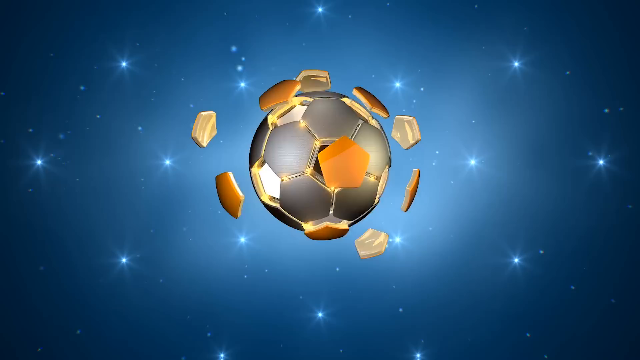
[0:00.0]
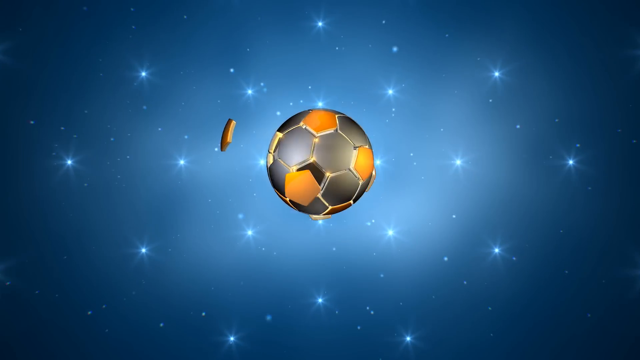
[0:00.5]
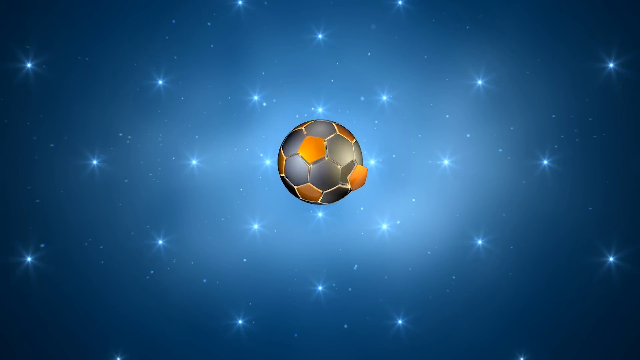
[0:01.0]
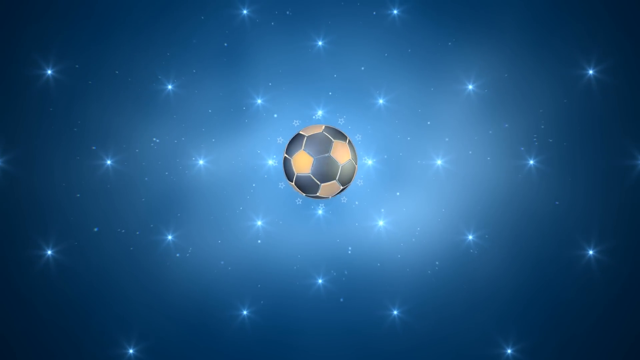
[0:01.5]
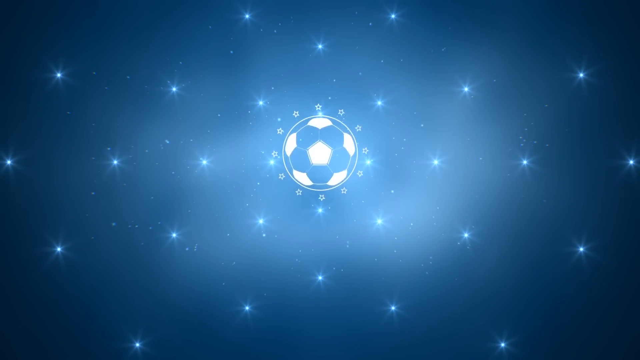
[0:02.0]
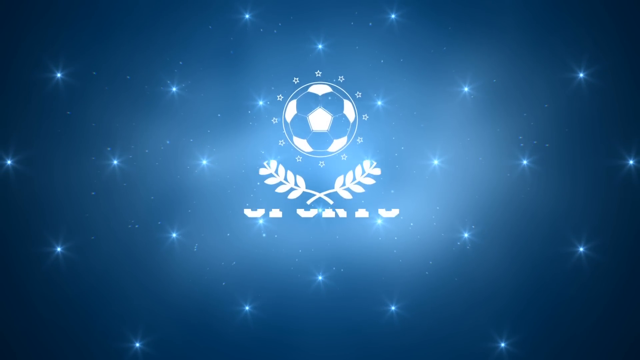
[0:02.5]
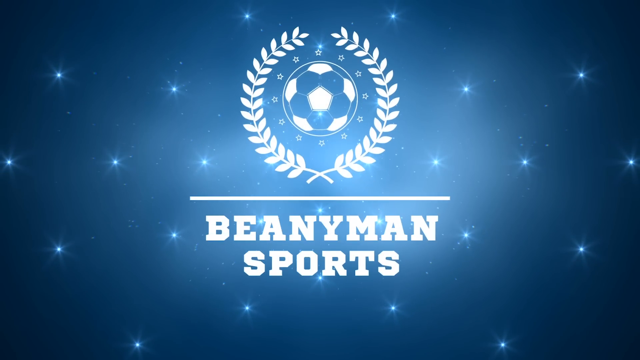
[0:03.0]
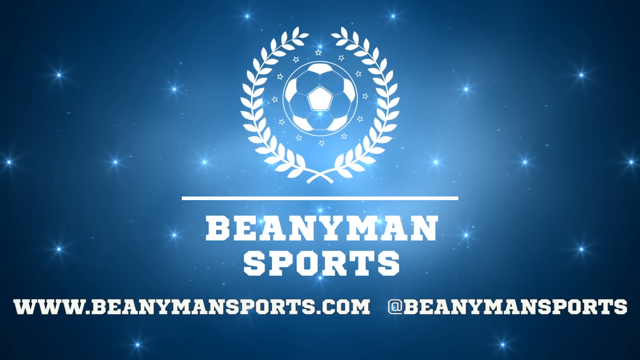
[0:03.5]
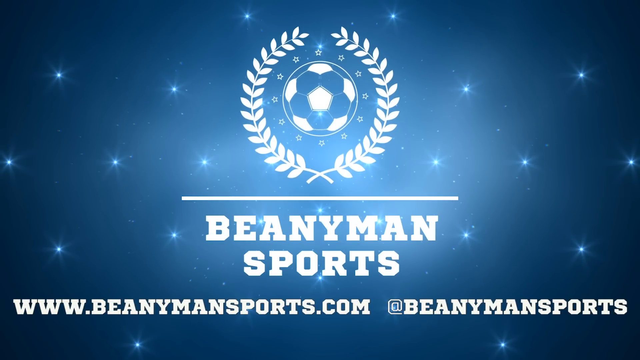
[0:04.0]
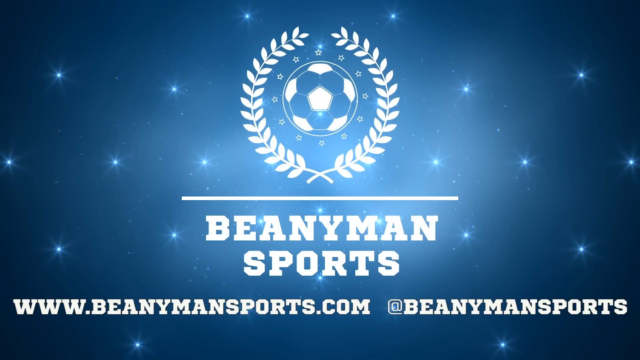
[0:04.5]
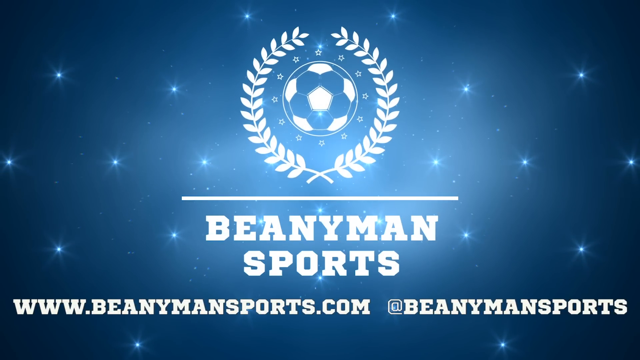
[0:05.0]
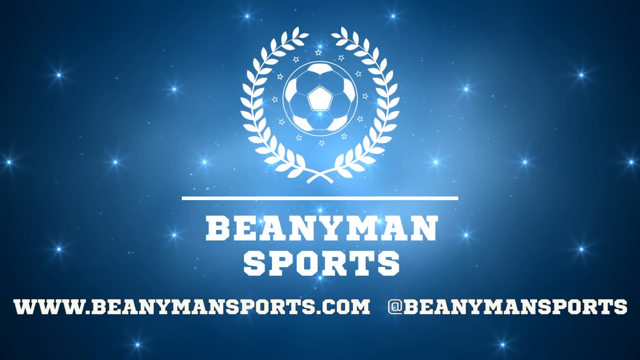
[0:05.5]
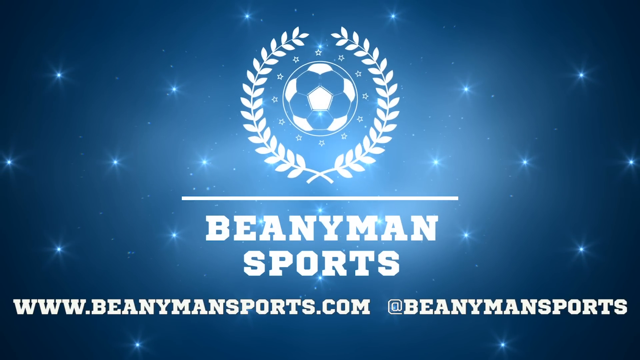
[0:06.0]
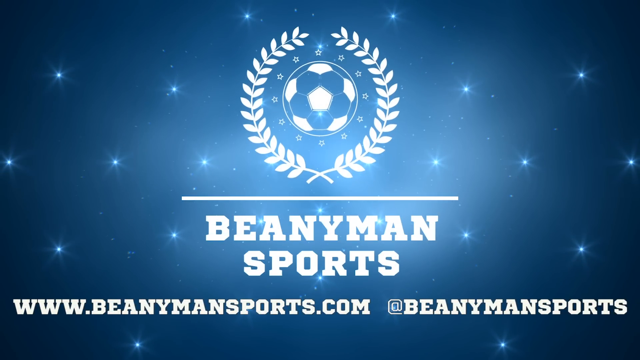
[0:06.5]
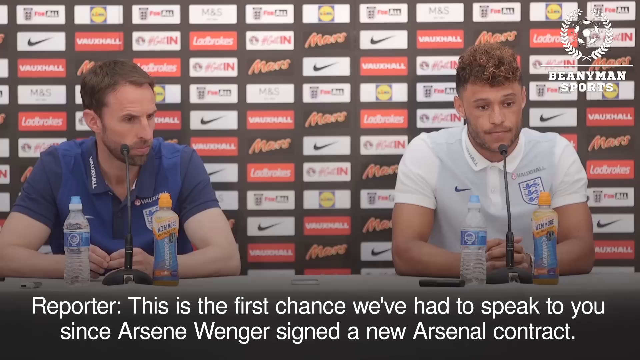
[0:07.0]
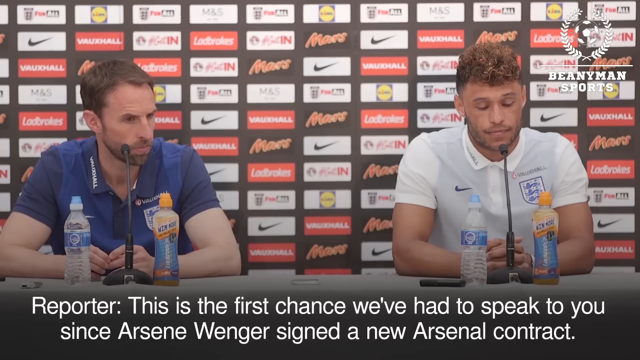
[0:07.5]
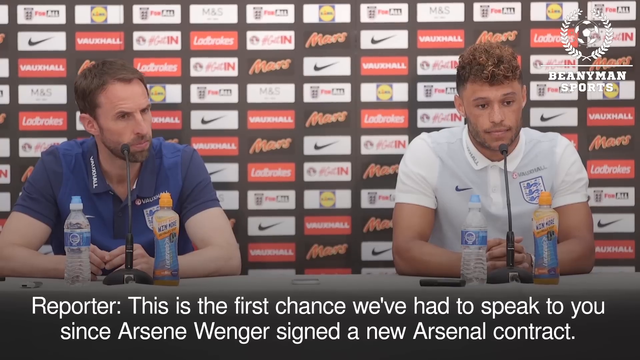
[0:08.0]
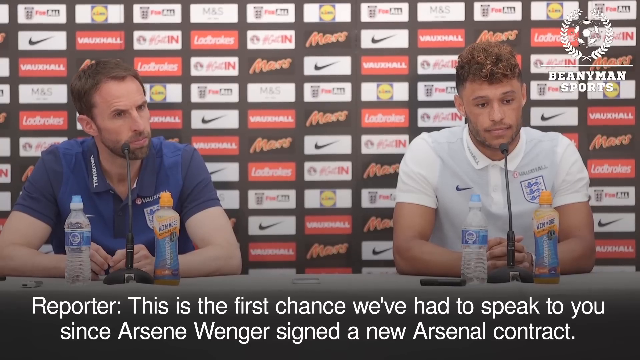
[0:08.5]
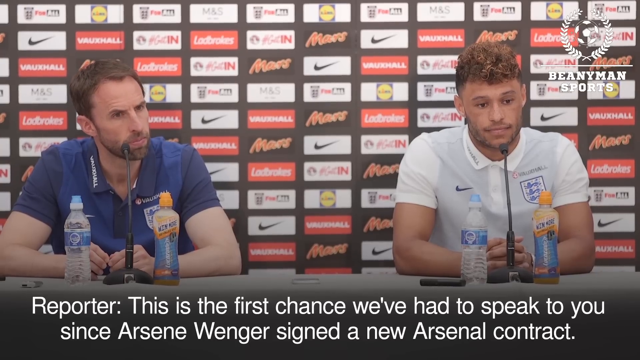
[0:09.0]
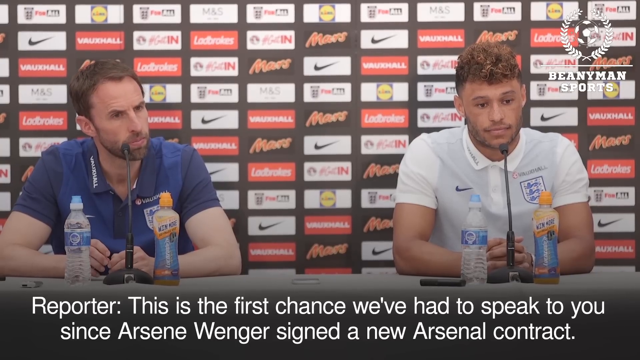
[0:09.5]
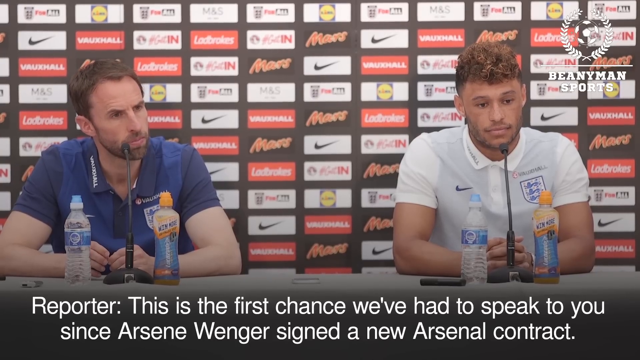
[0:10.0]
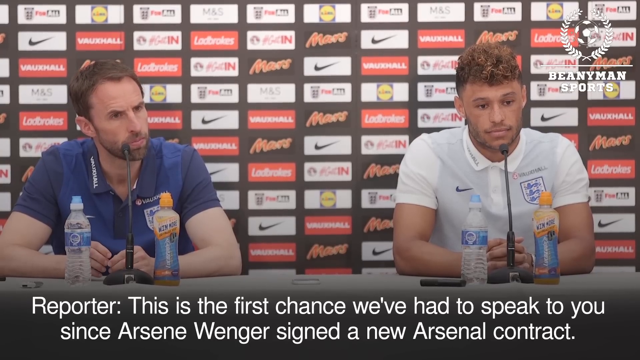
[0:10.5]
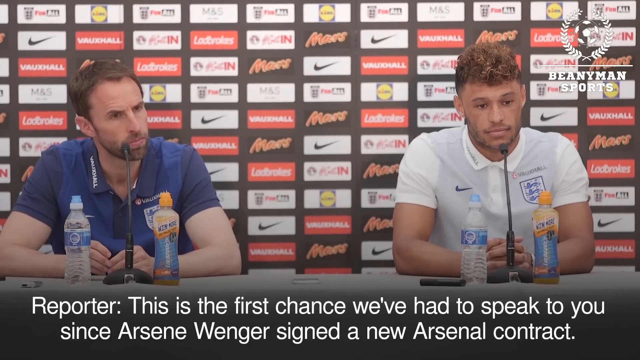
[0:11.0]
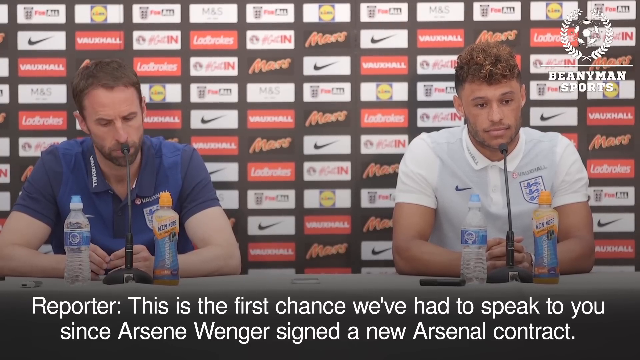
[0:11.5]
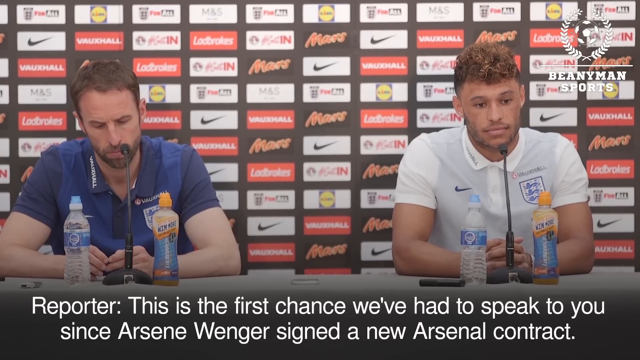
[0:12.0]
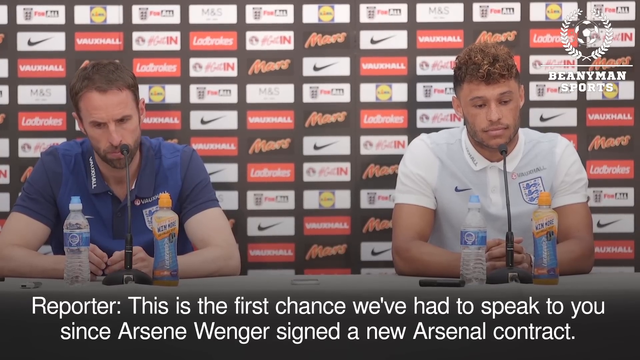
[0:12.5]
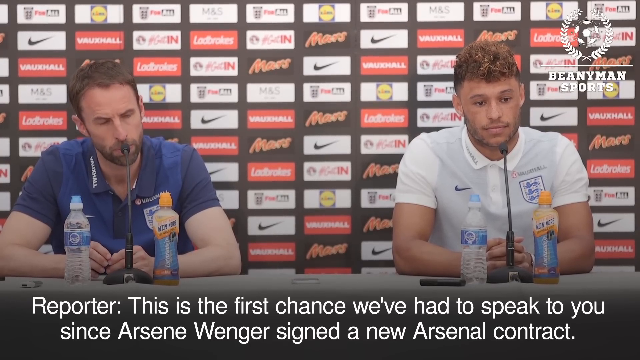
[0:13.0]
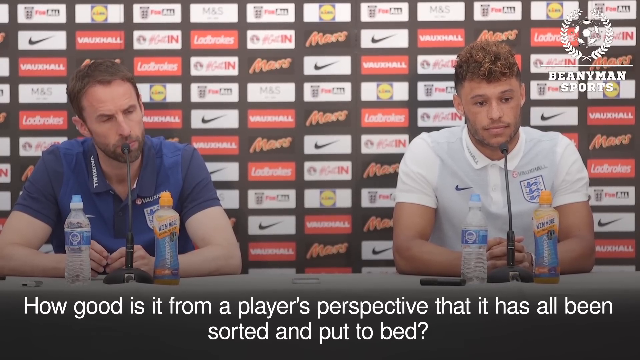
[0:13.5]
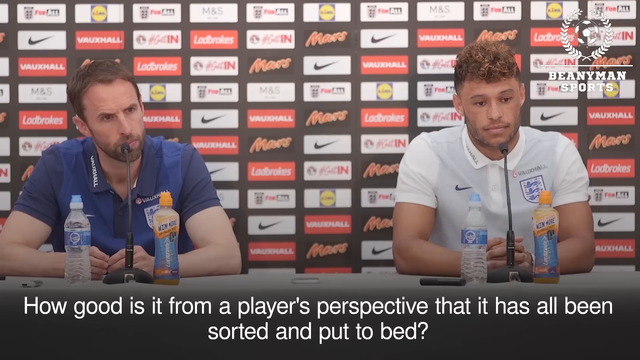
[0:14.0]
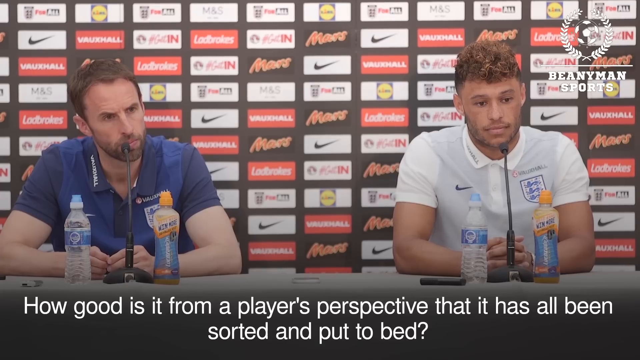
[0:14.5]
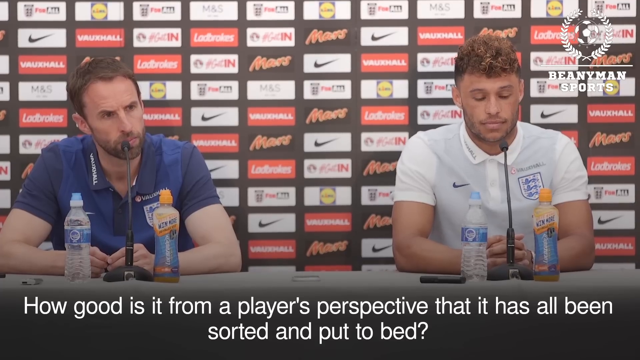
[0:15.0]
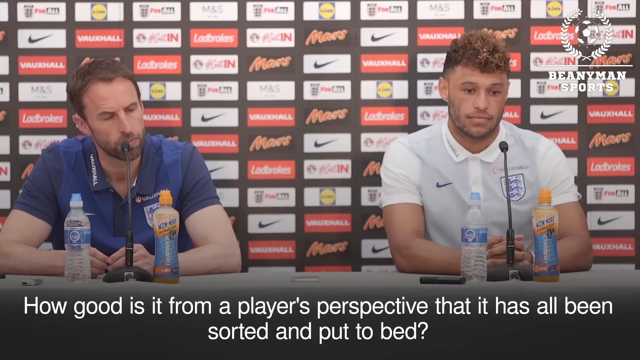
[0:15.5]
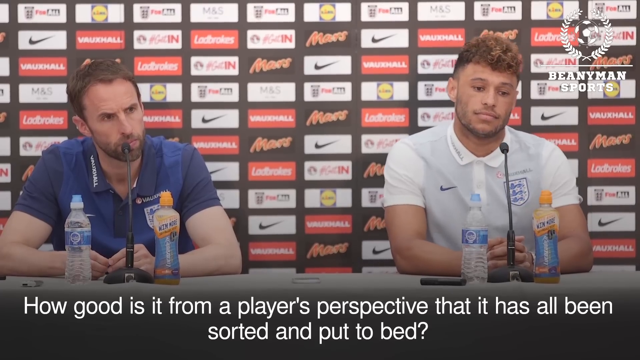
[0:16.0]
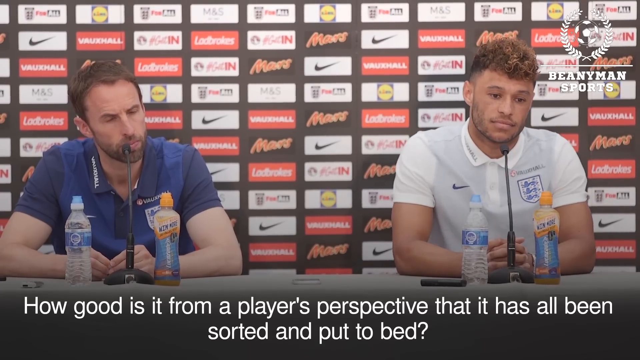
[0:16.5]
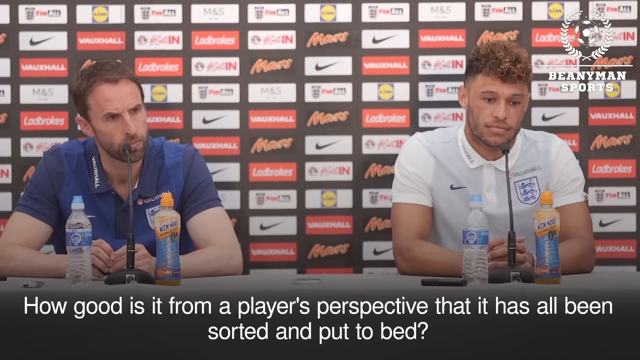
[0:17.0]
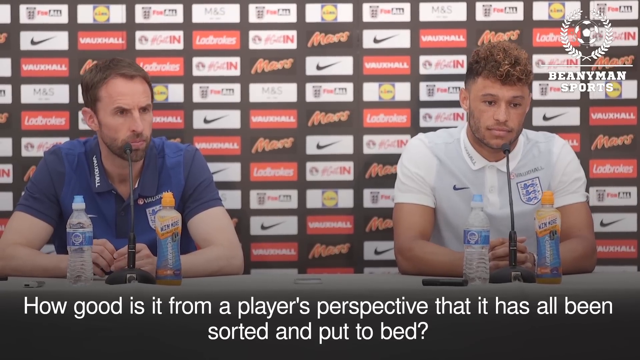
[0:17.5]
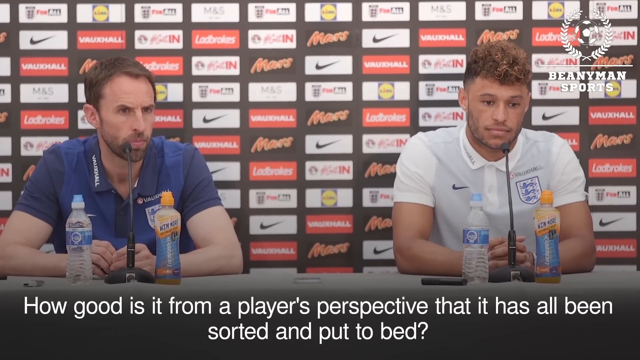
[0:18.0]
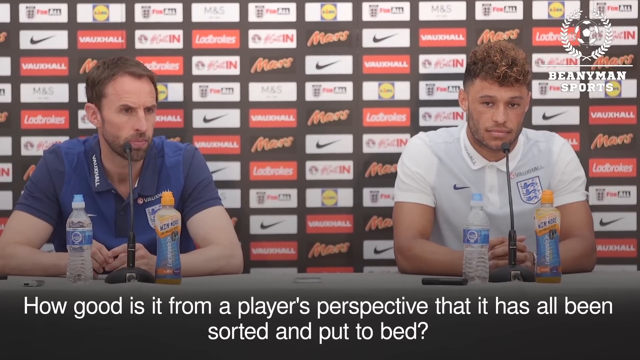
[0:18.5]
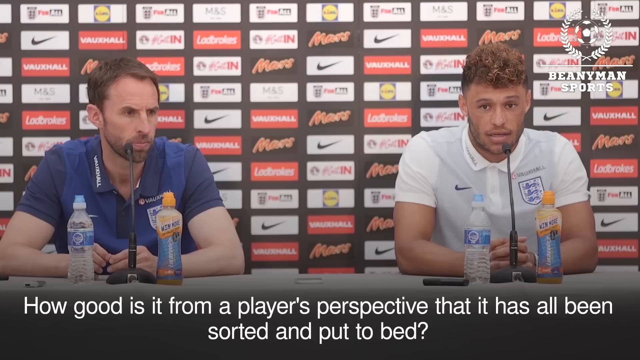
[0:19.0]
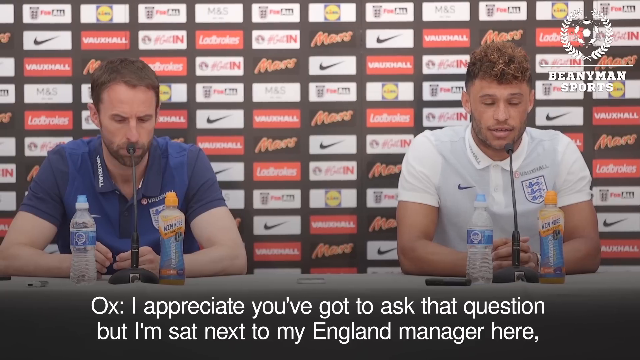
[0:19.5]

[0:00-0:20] The video opens on a background that looks somewhat like a sky or space, in blues: lighter blue in the middle and darker blue toward the edges, with little sparkles that look like they could be stars. In the middle there appears to be a grayish soccer ball; of its hexagons, some are gray and some are a kind of gold color. At first the gold hexagons look like they are being blasted off the soccer ball, and then the ball comes together. It is for Beany Man Sports, spelled B-E-A-N-Y-M-A-N, with the website beanymansports.com. Next comes what looks like a news or press conference with a couple of players, with captions on screen. The reporter says "this is the first chance we've had to speak to you since" and mentions signing a new Arsenal contract, then asks "how good is it from a player's perspective that has all been sorted and put to bed." Two men are at the press conference. The one on the left wears a blue polo-type shirt and looks to be probably in his mid-30s, with medium brown hair, a short beard and a mustache. The man on the right looks a little younger, maybe in his early 30s.